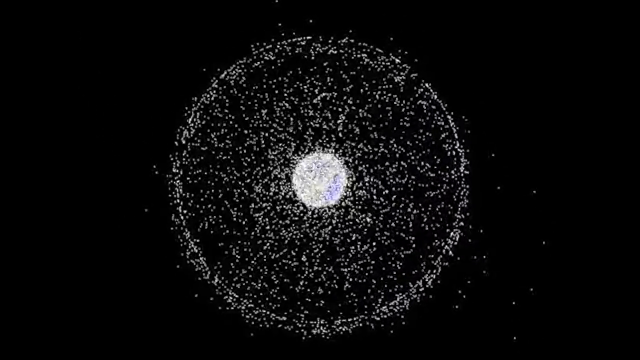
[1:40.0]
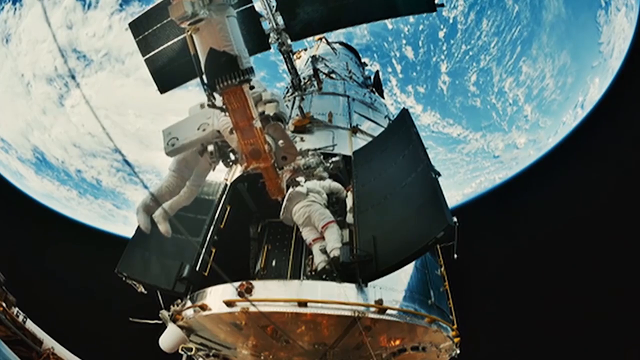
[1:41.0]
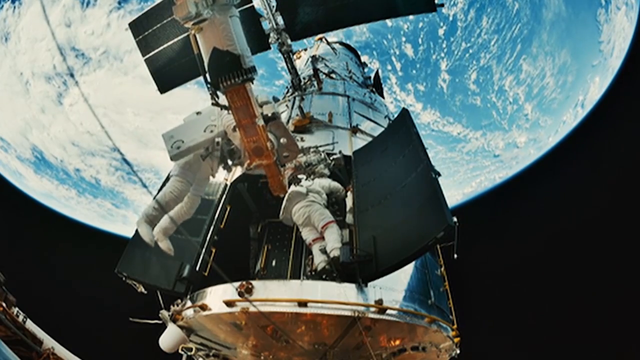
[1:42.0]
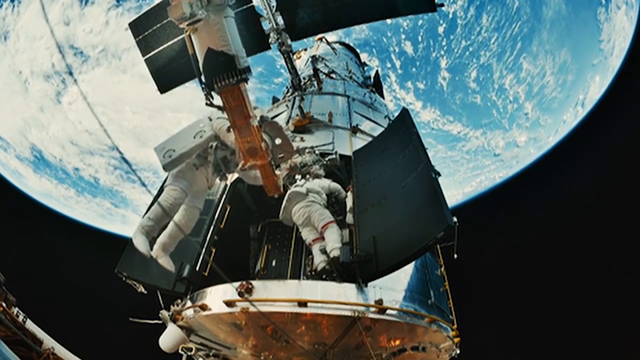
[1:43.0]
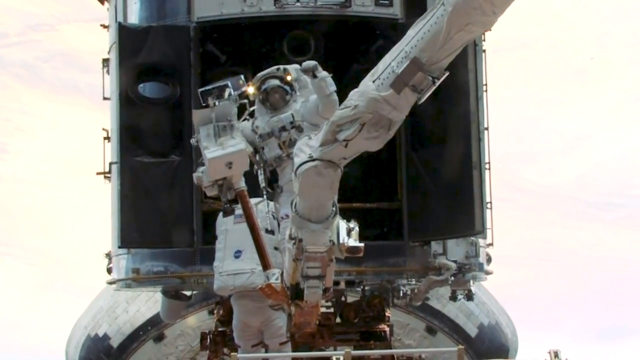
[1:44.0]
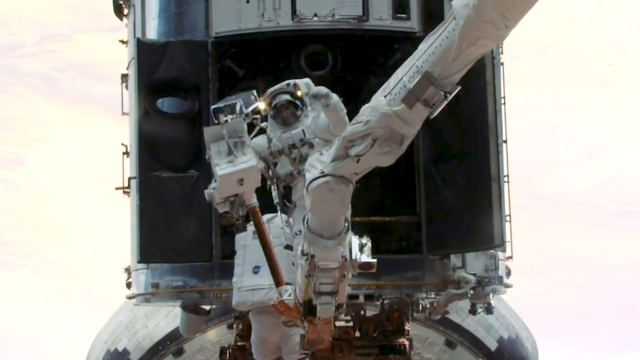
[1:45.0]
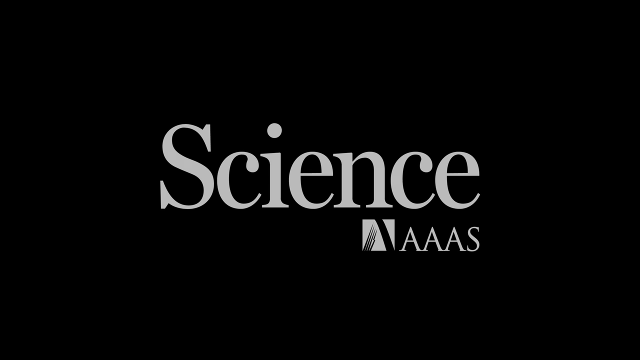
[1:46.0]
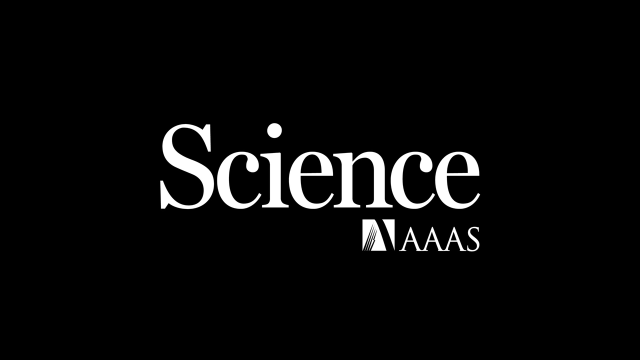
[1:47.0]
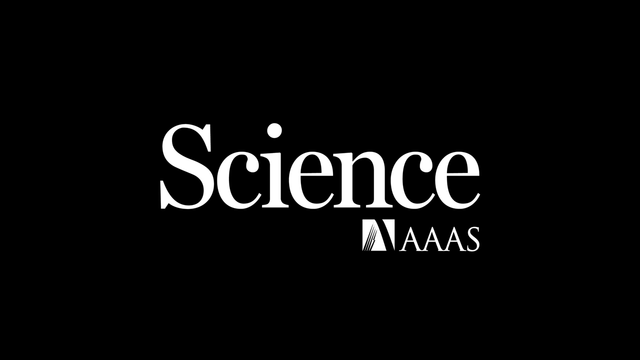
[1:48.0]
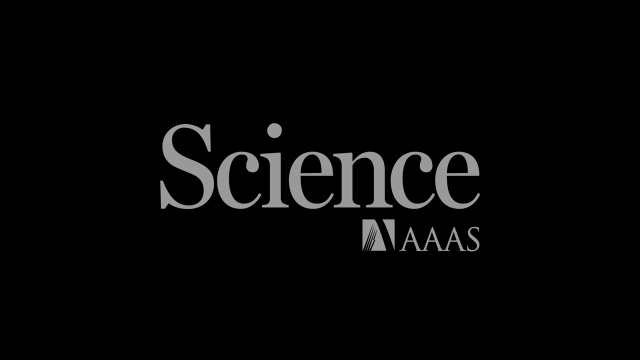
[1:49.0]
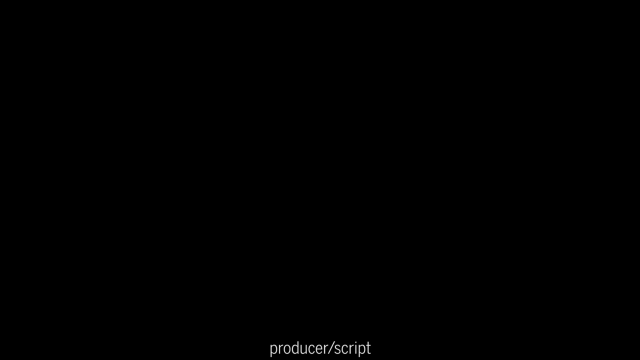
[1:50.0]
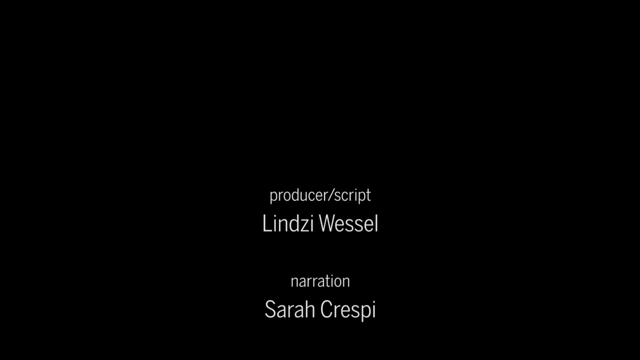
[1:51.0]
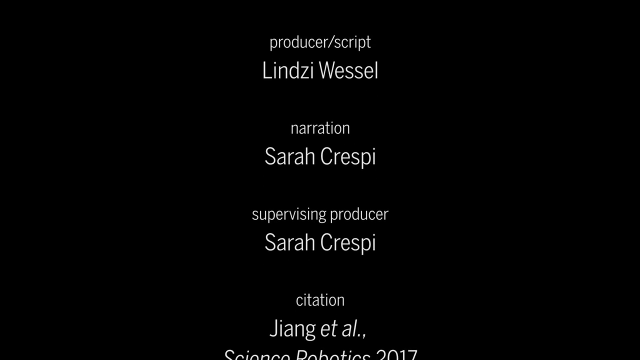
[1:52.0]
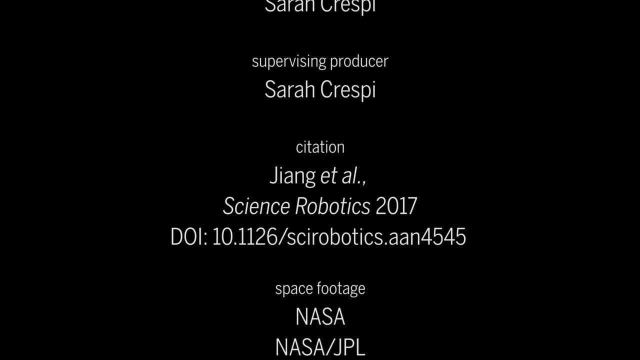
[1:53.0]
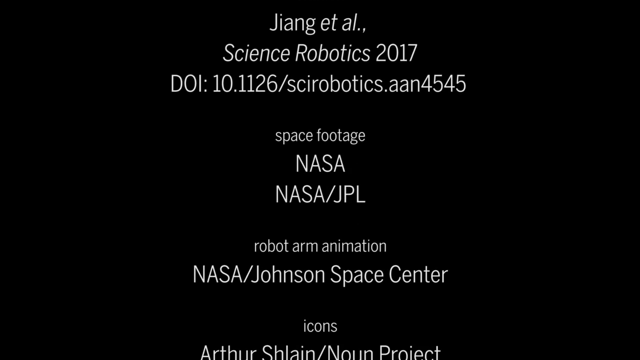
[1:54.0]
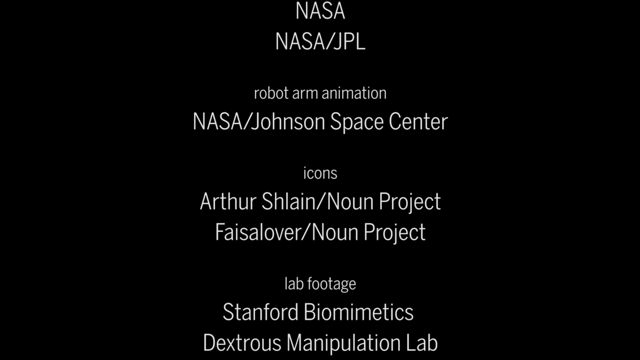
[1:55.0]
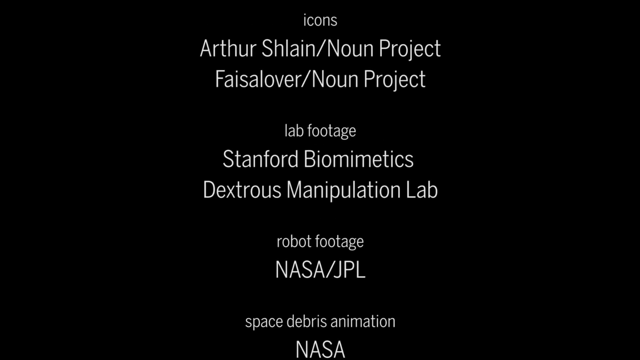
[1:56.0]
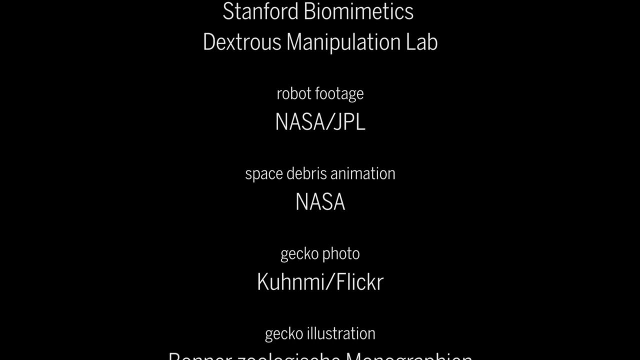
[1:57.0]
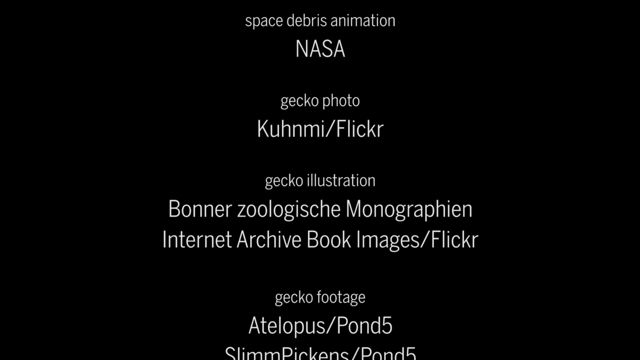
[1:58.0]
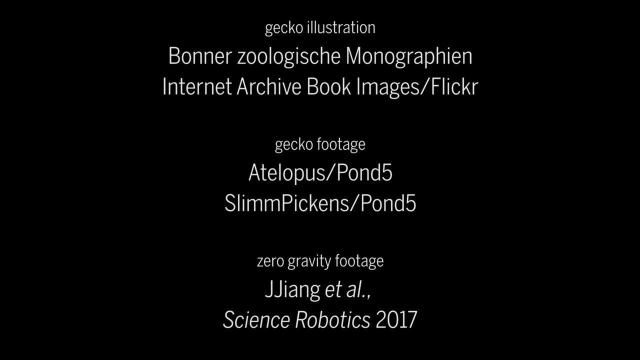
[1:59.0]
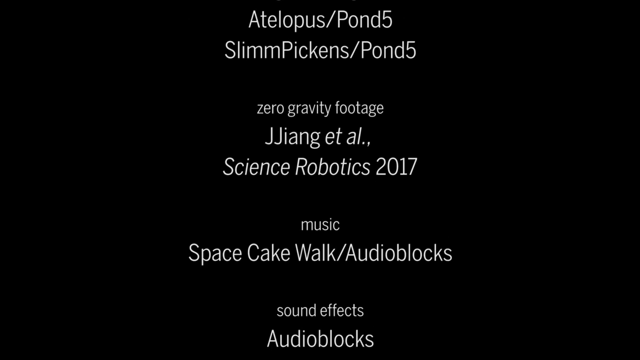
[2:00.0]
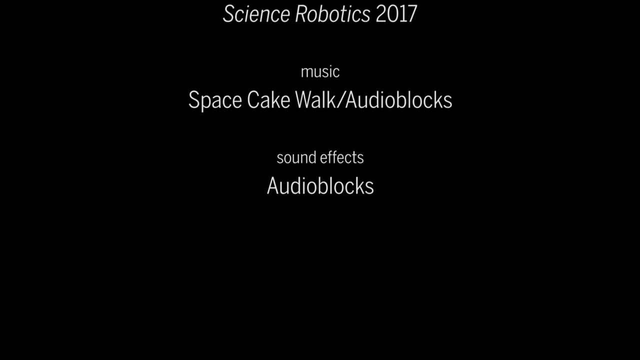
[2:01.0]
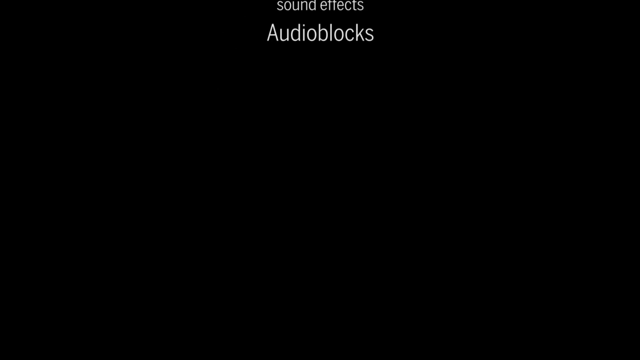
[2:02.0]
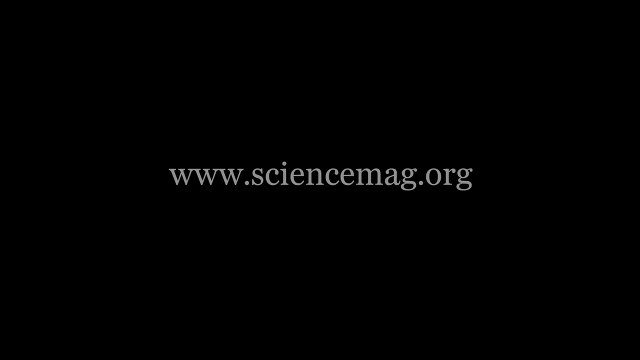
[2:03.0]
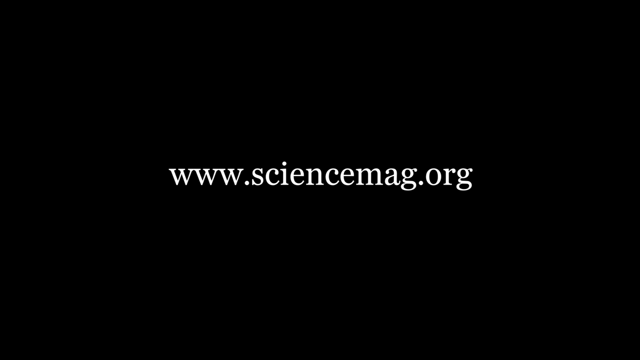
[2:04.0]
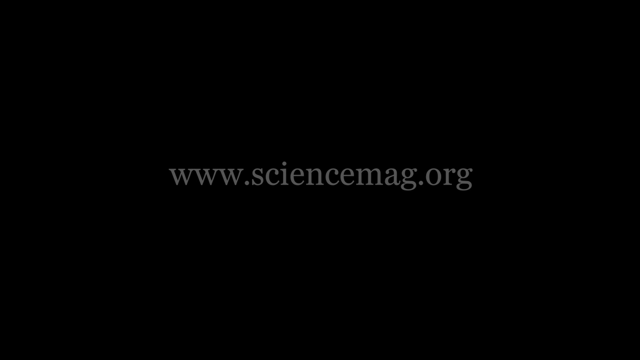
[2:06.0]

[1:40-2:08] The screen is black. Directly in the middle is a twinkling white ball that looks like it is made up of millions of smaller white dots, and surrounding it are more dots forming a larger circle. There are millions of dots, and they are all moving. The video cuts to a shot with the Earth at the top of the screen and part of the space station in the middle, with two astronauts in astronaut suits holding on to the space station. The camera is at the bottom looking up, toward the space station with the Earth in the background. The screen turns black again, and in the middle, in big white letters, is the word "SCIENCE", with the letters "AAAS" underneath, also written in white.